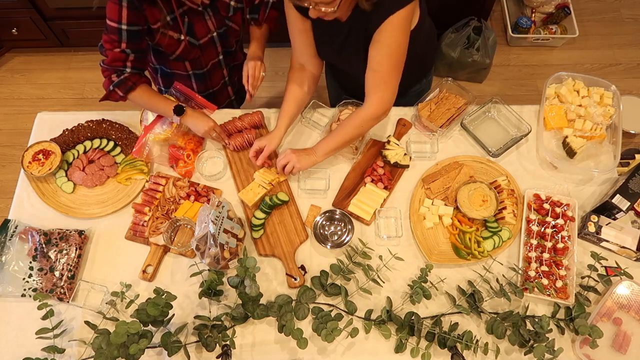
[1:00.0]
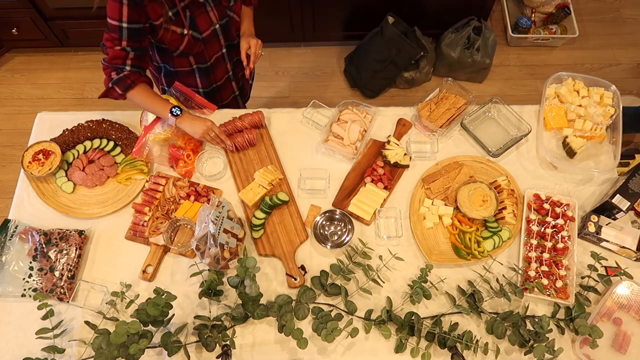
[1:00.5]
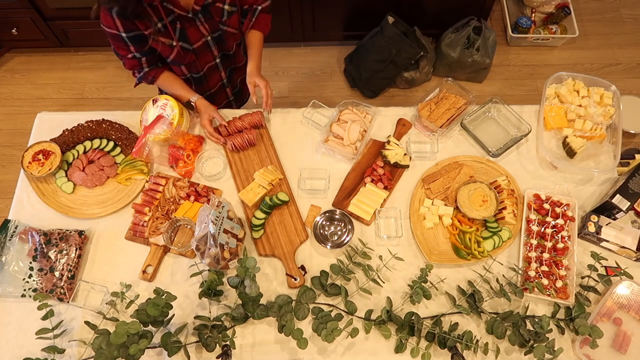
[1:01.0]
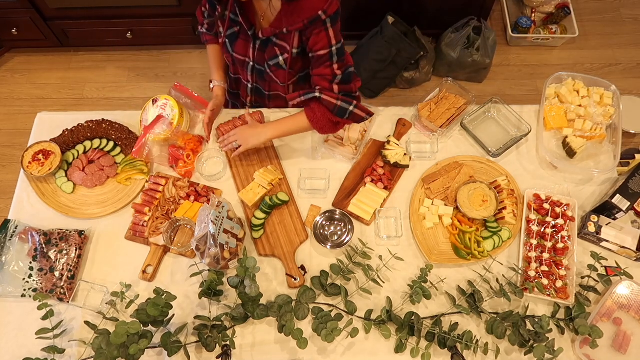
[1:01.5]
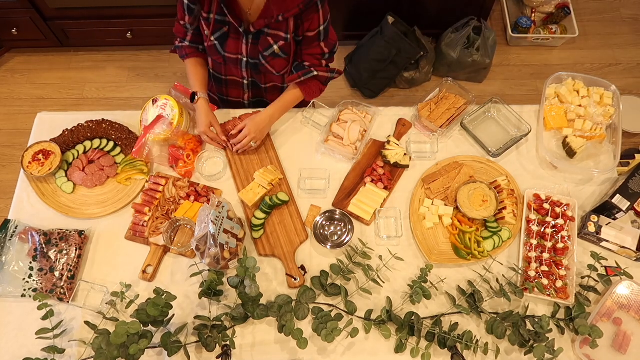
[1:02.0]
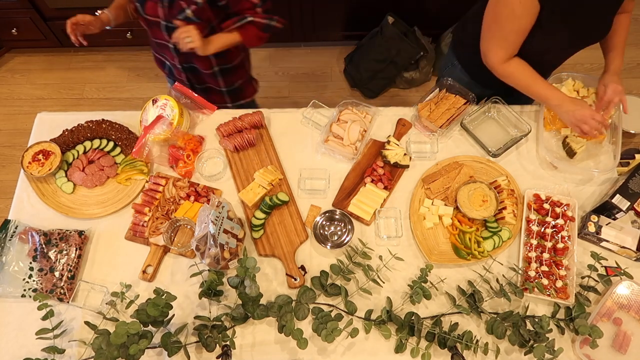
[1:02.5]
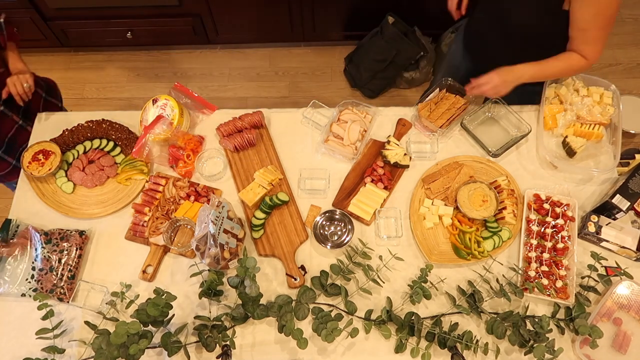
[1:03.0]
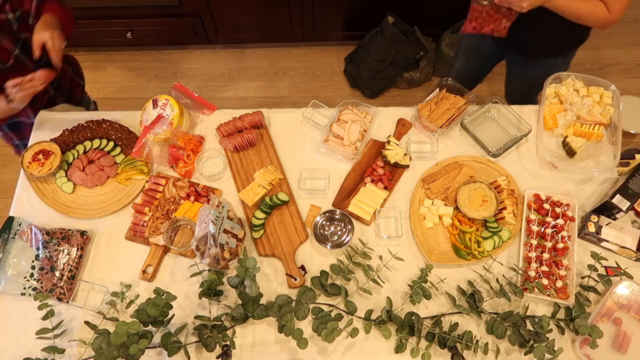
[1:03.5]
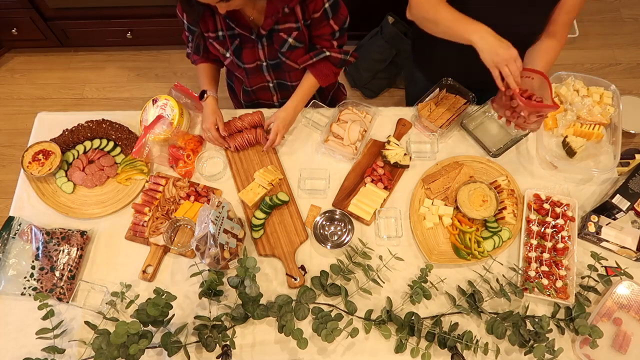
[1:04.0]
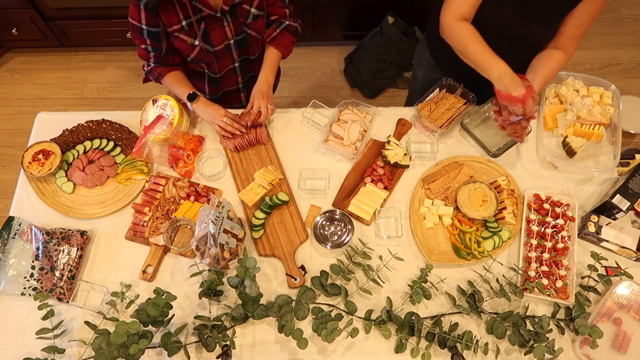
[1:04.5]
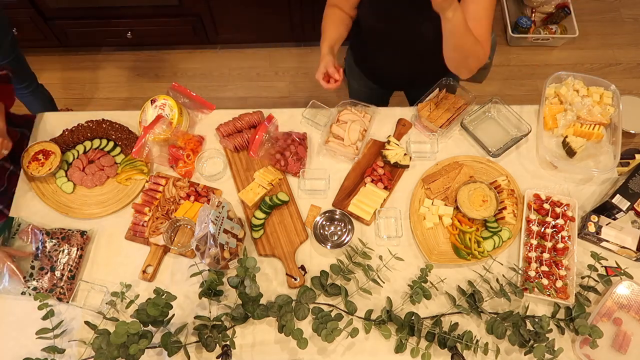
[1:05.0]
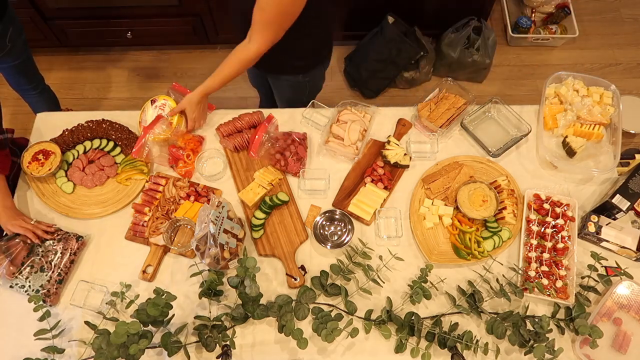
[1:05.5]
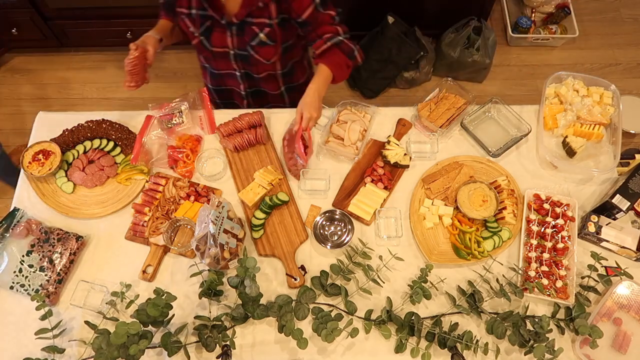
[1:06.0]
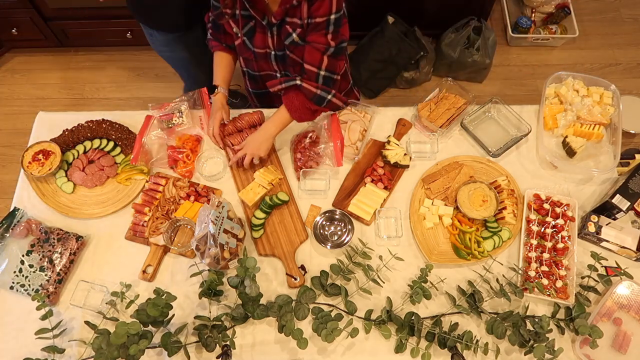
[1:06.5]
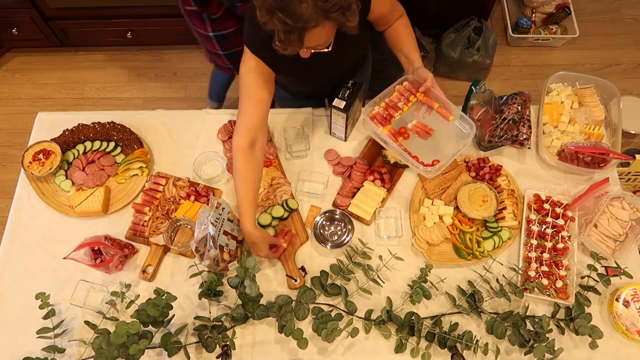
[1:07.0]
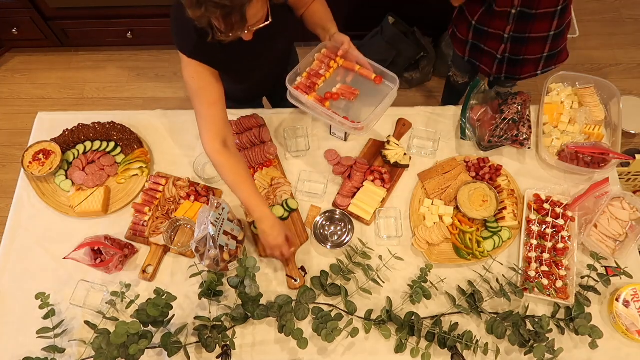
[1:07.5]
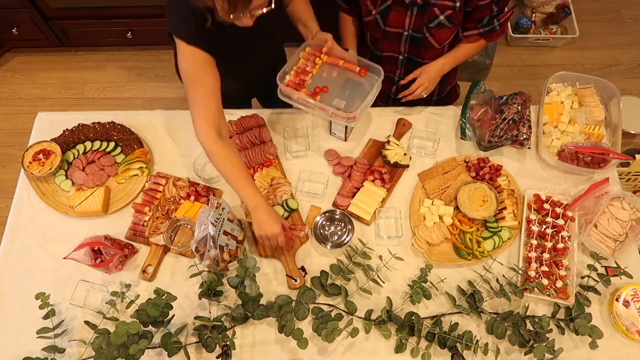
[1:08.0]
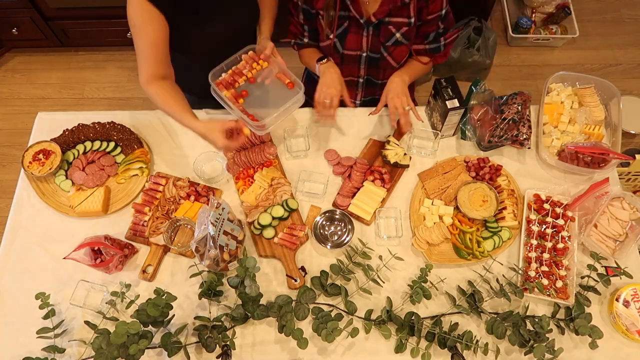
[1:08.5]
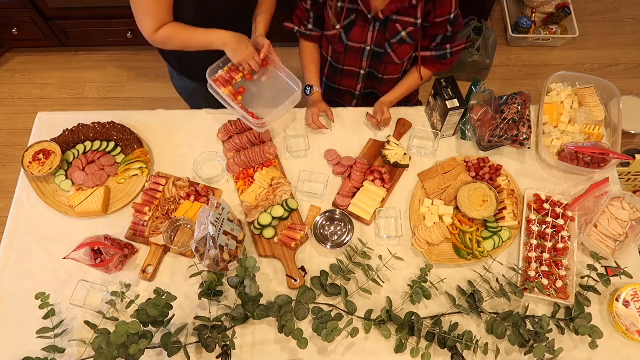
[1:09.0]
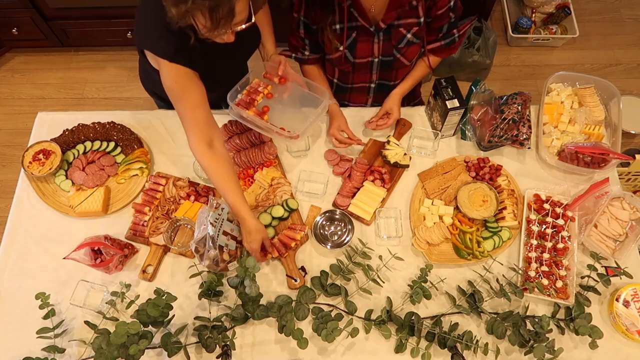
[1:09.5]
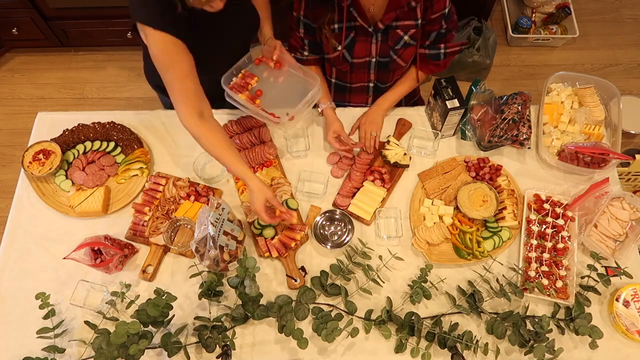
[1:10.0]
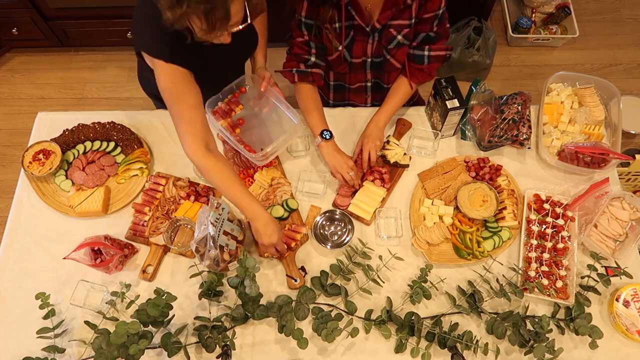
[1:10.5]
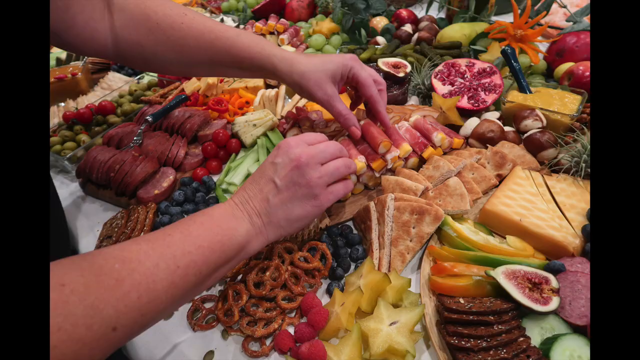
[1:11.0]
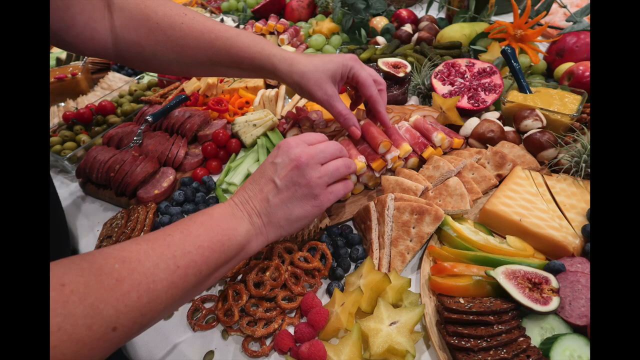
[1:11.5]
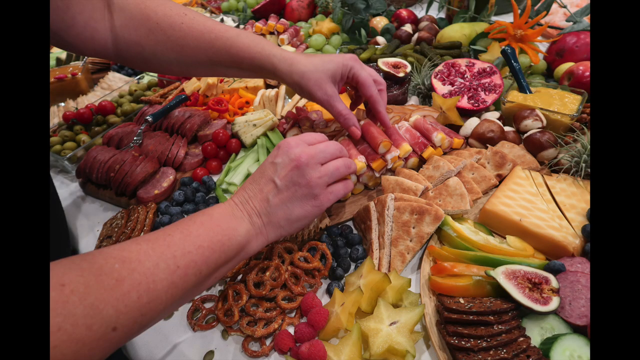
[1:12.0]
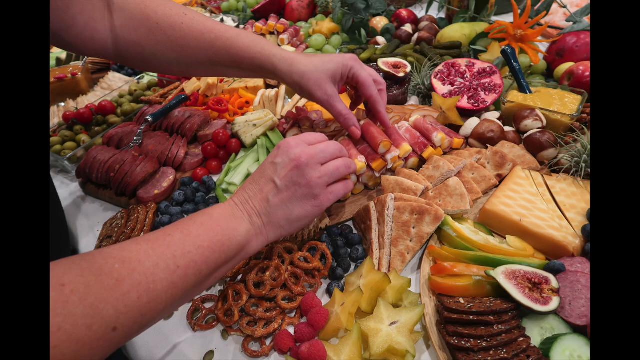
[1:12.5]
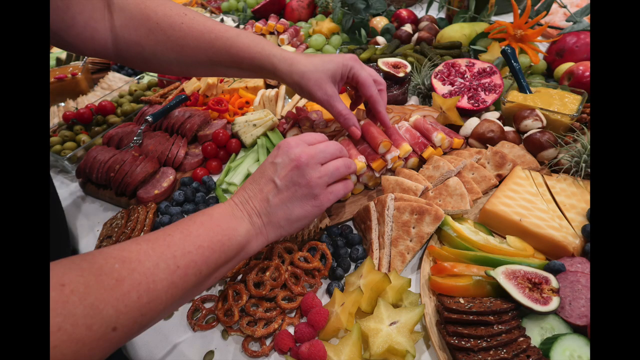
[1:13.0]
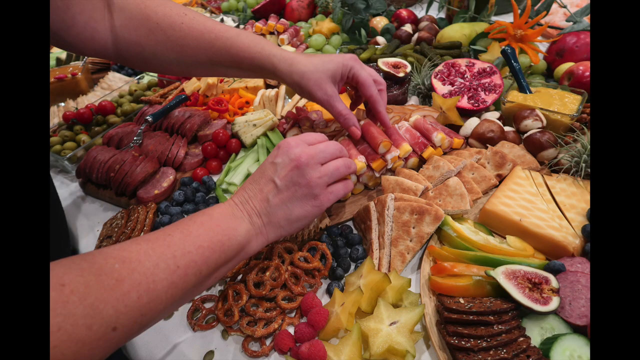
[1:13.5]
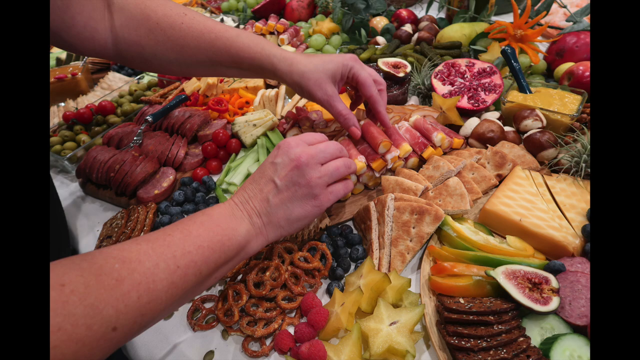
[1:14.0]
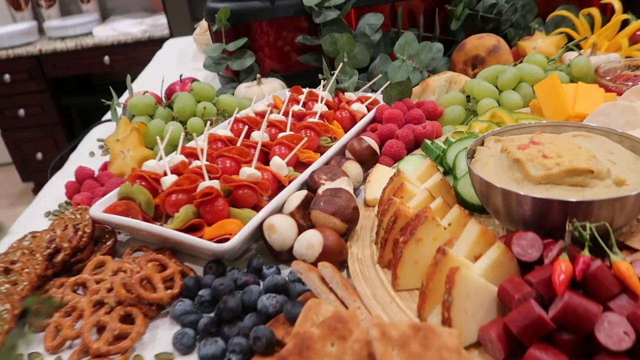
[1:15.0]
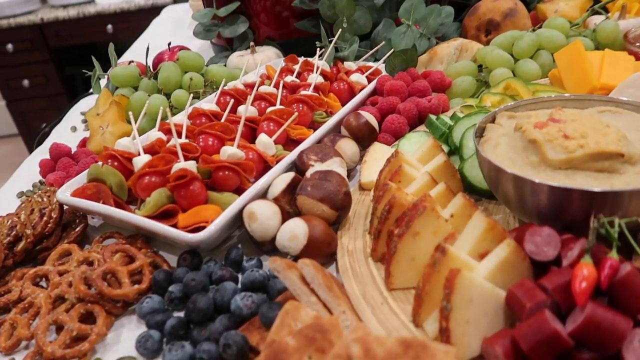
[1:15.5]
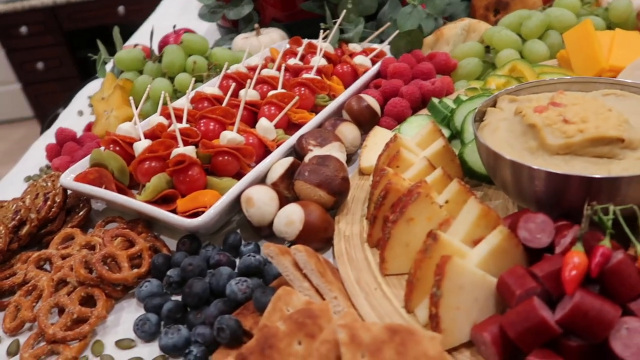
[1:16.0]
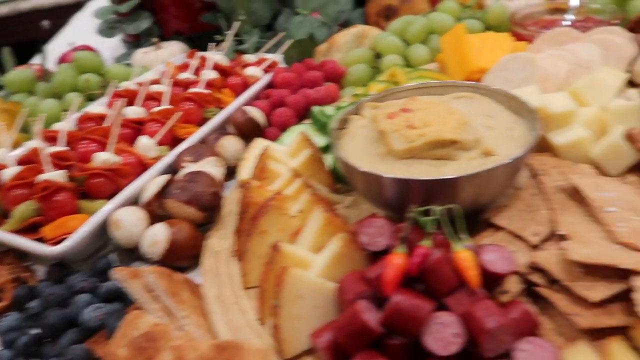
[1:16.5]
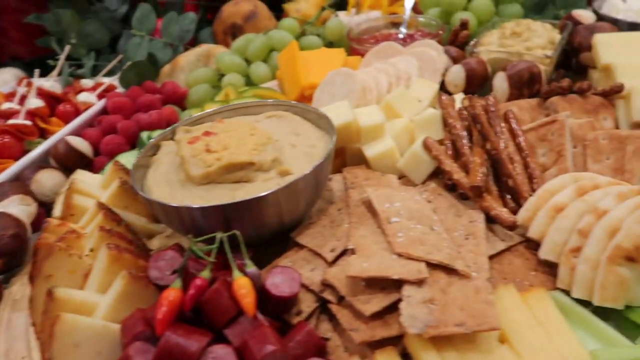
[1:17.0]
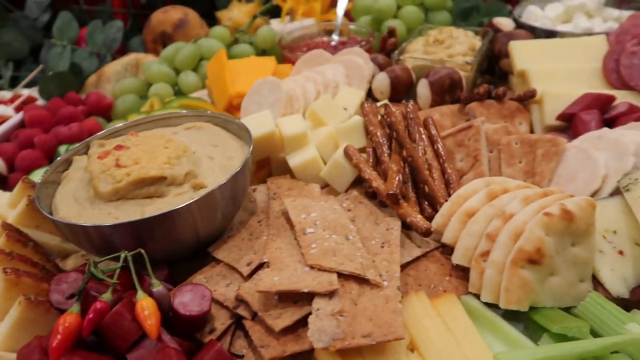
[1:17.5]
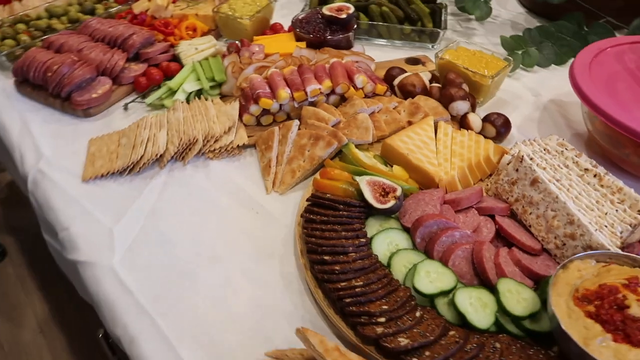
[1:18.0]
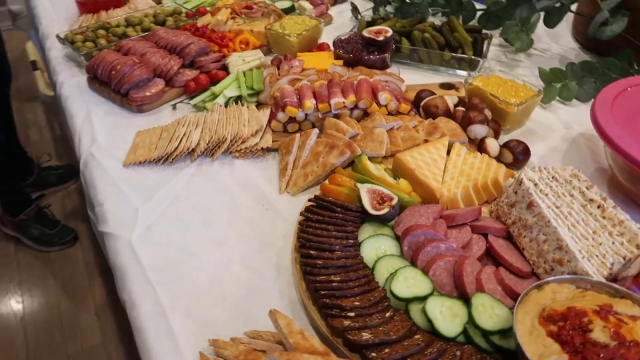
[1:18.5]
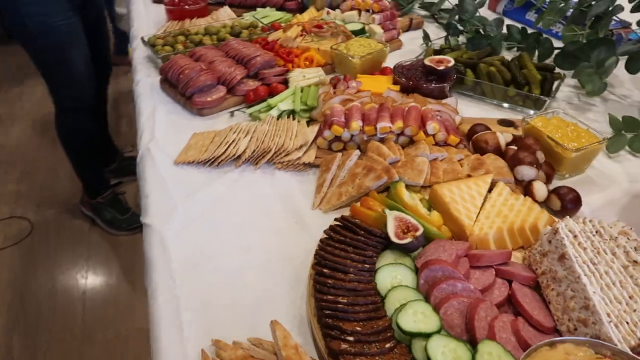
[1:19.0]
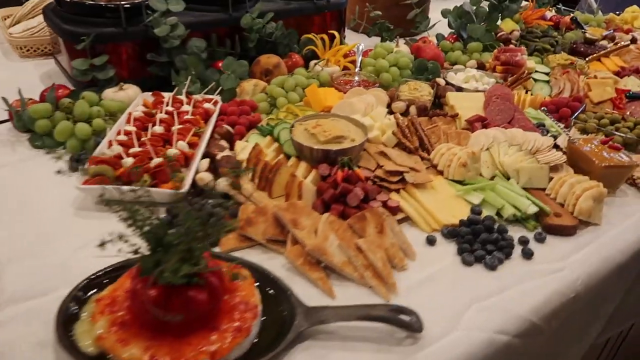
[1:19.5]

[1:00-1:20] An aerial view shows two women working at a table with a white covering. There are over five charcuterie boards on the table, ranging in color from light brown to dark brown, with various foods being neatly arranged on them. The woman in the dark silver black top wears a pair of glasses. The floor is light brown, and a bin on the ground is filled with items. The woman in the black dress holds a transparent tupperware, grabbing items from the board and placing them in it. The woman in the plaid shirt wears a wristwatch. The video then transitions to a hand and various food on a table: a platter of food in trays, red bell peppers, grapes, strawberries, cakes, and more.